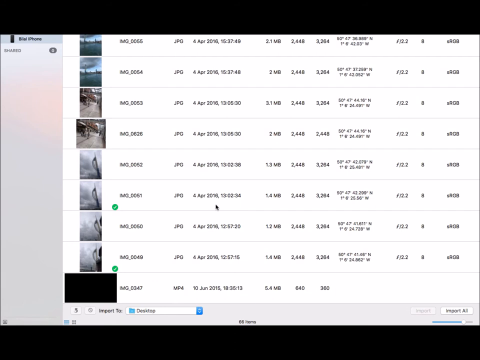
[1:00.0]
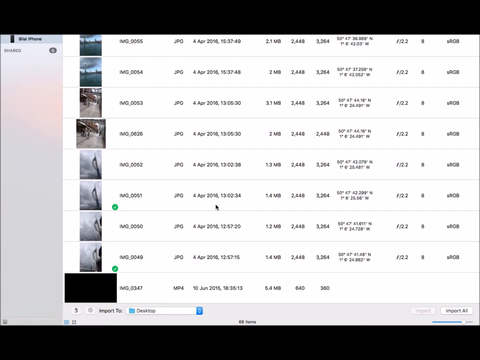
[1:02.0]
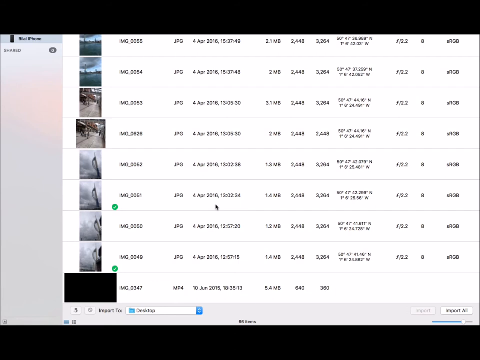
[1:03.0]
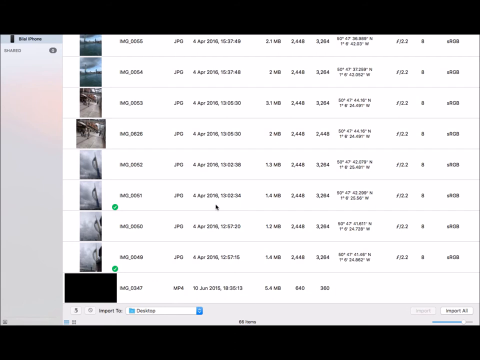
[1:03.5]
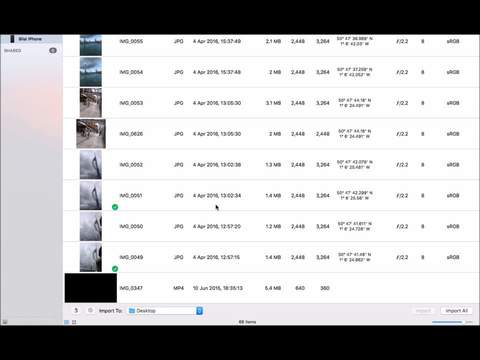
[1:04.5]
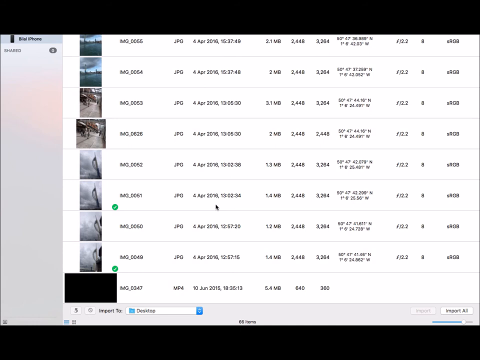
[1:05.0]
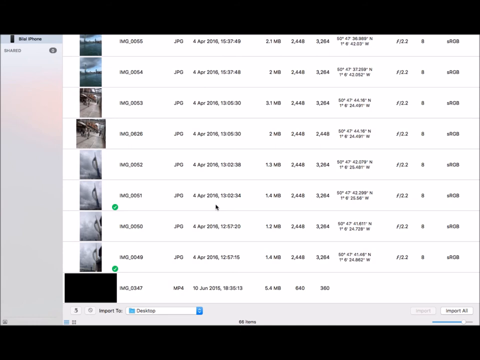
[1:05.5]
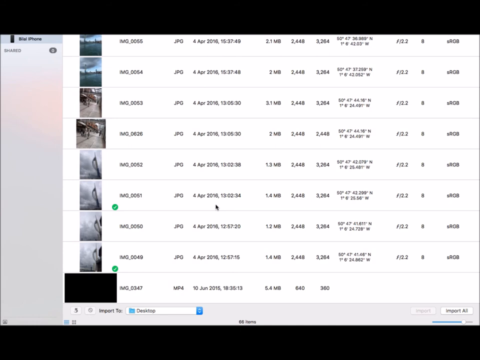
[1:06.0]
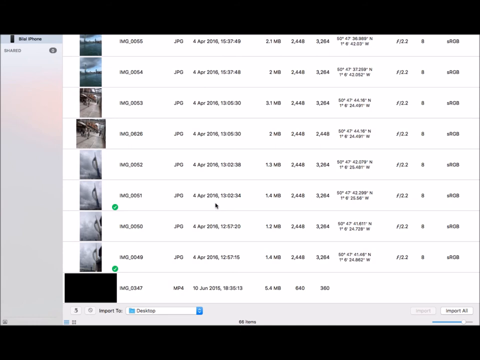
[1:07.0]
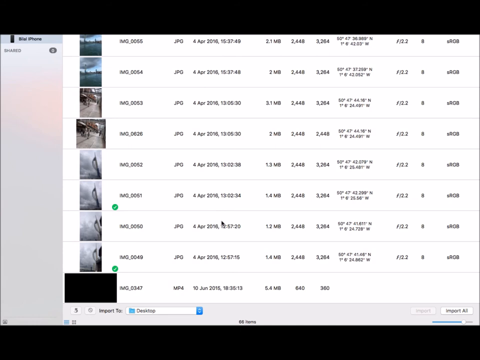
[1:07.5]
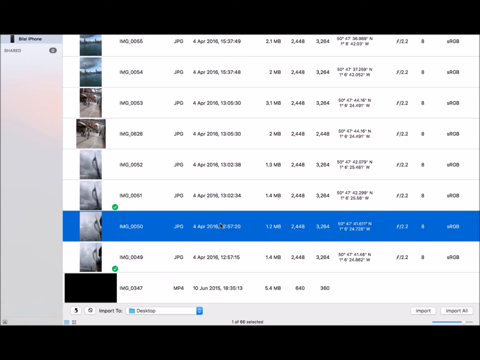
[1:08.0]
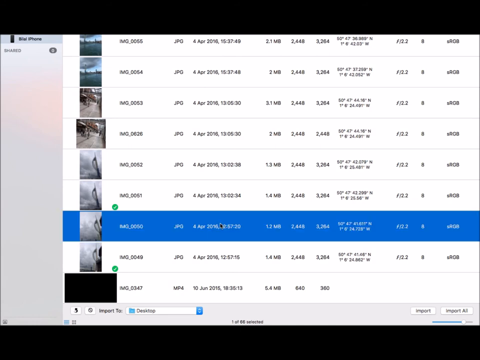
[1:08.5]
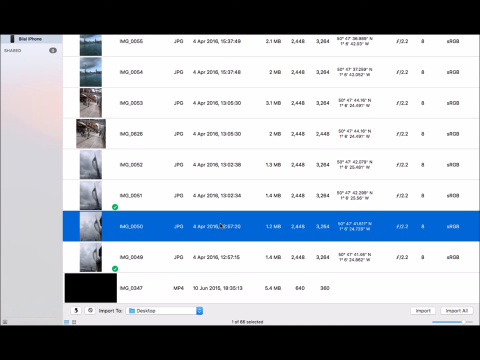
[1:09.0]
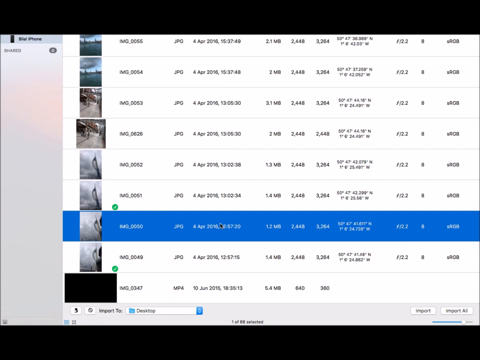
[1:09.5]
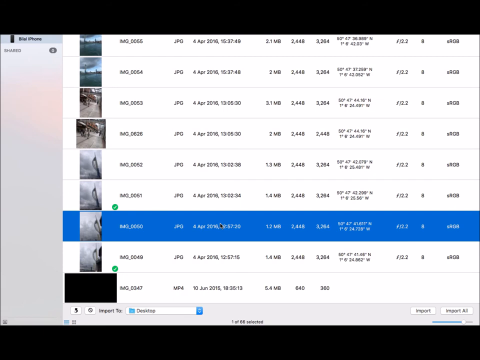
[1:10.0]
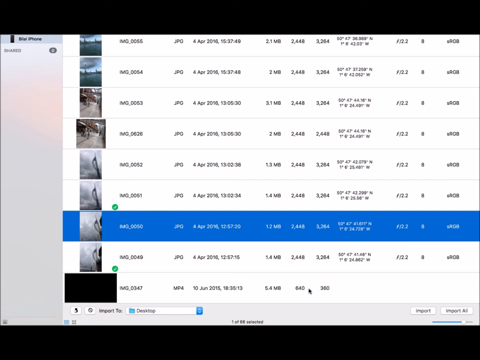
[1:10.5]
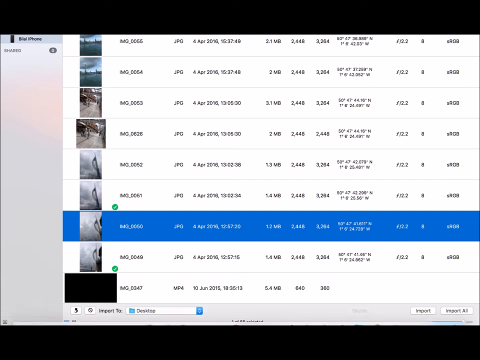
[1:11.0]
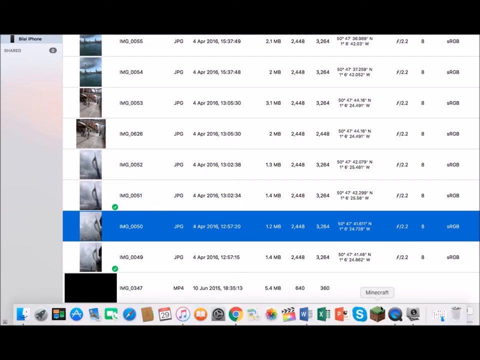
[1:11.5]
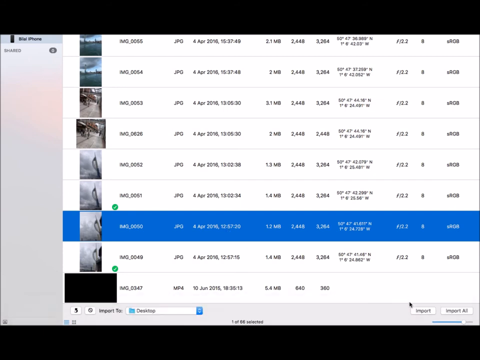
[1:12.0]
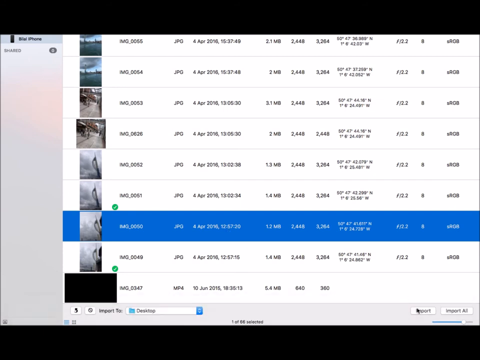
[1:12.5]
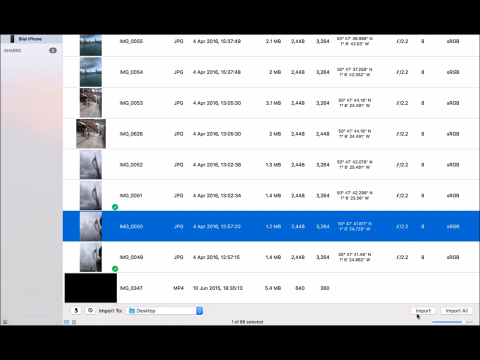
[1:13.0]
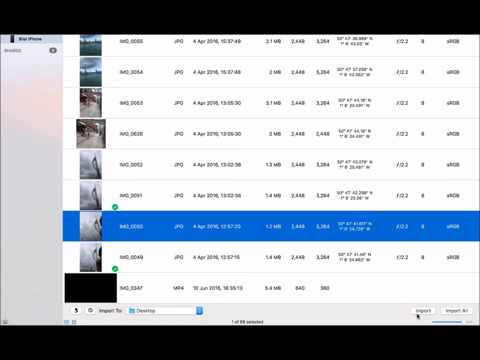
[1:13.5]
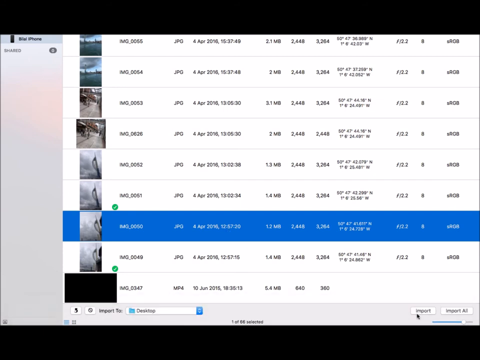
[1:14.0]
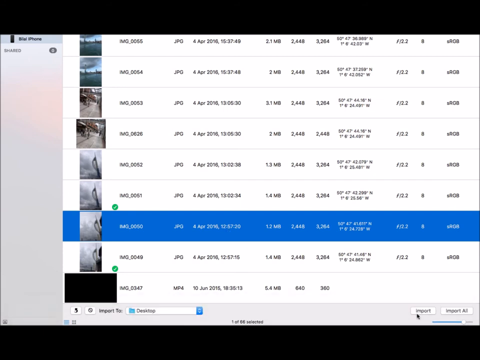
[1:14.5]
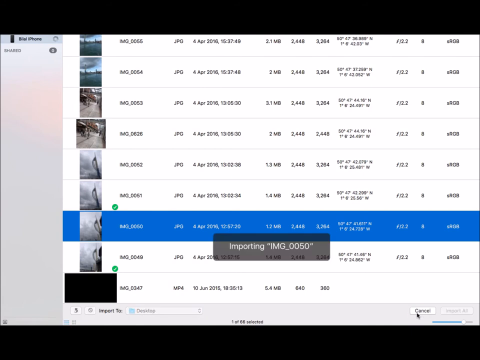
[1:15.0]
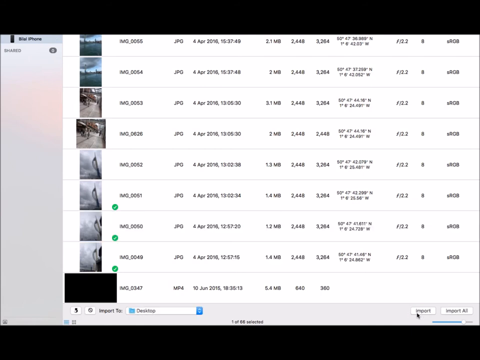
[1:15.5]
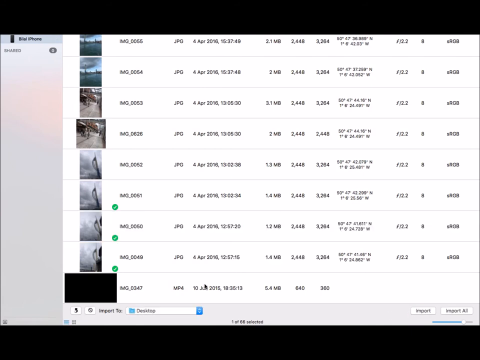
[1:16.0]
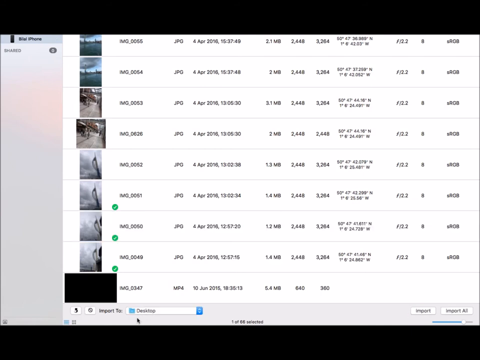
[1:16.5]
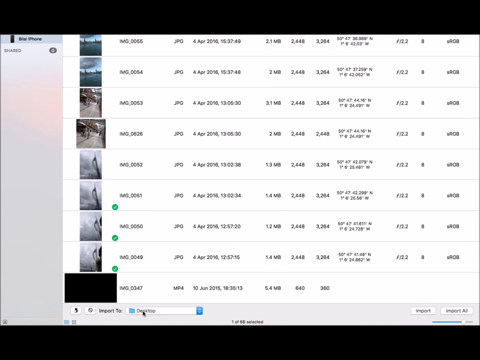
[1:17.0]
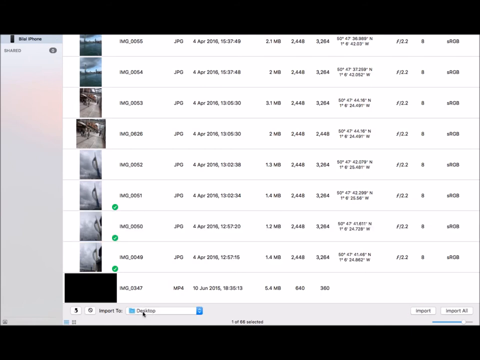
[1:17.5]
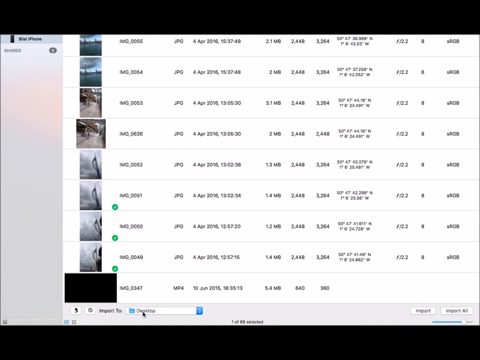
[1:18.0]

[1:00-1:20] The mouse is underneath one of the image dates in the middle of the screen. Two of the images are selected, shown by small green check marks to the right of the photos. The photos seem to be repeated or very similar. The person clicks the image third up from the bottom, and the image and its information are highlighted in blue. The black mouse rolls over and clicks an import button at the bottom of the screen, and the blue highlight disappears. Next to the import button is a button that says "import all," and there is also a drop-down button for choosing where to import the images, currently set to desktop.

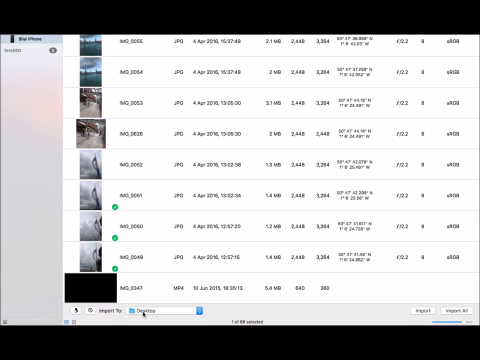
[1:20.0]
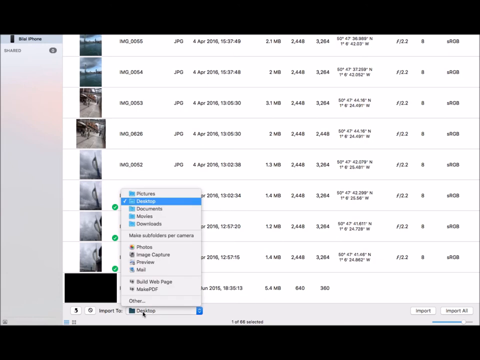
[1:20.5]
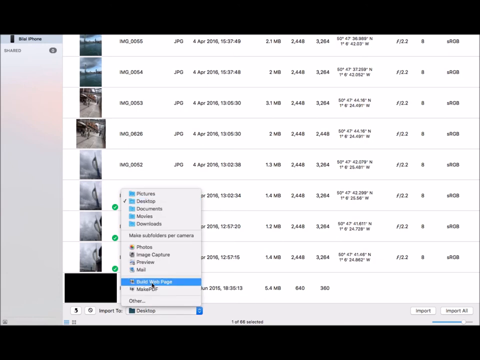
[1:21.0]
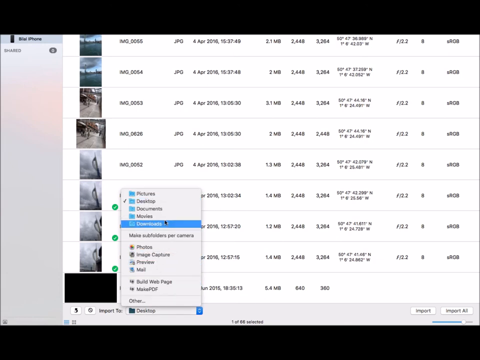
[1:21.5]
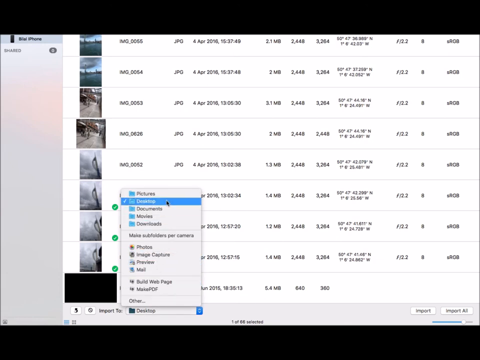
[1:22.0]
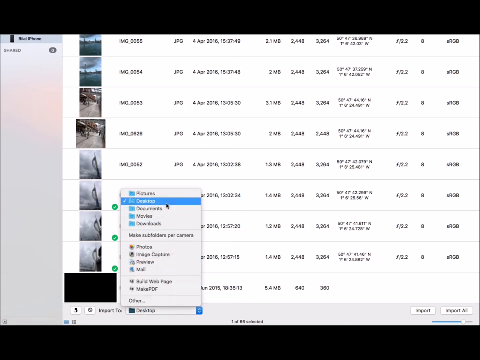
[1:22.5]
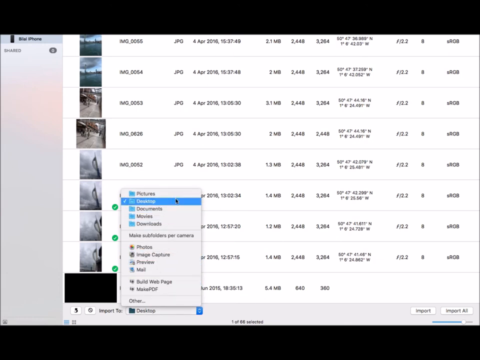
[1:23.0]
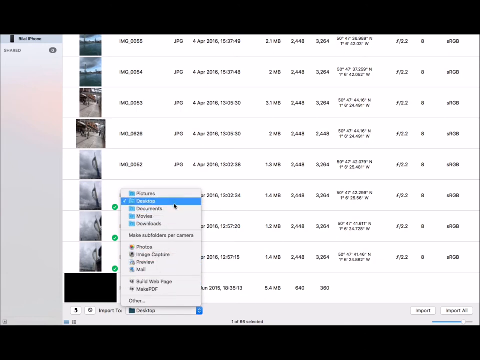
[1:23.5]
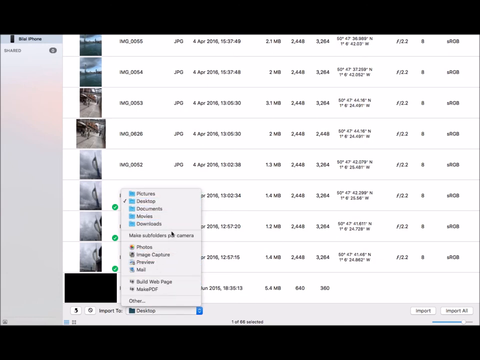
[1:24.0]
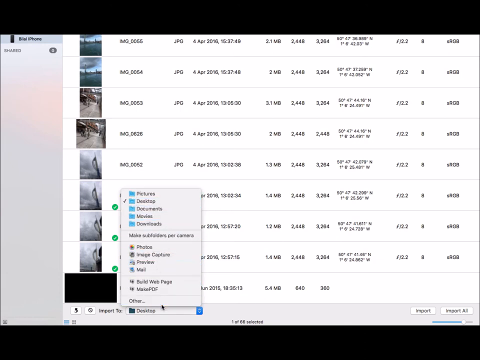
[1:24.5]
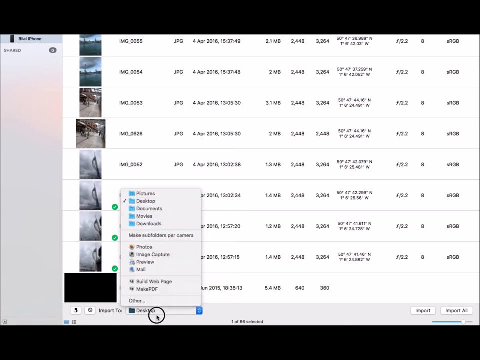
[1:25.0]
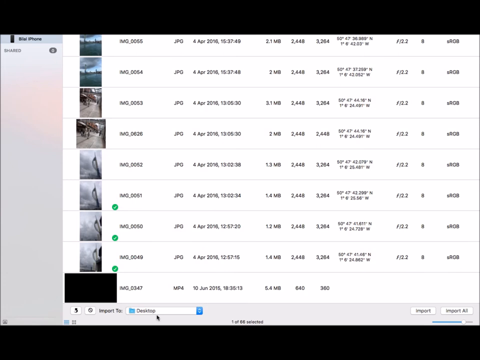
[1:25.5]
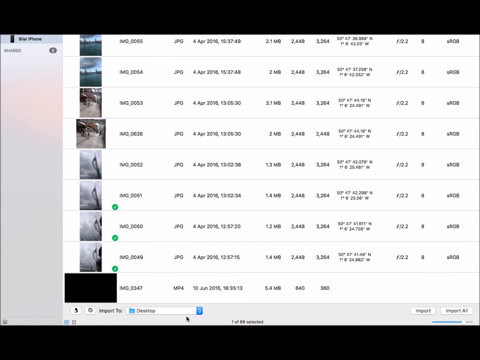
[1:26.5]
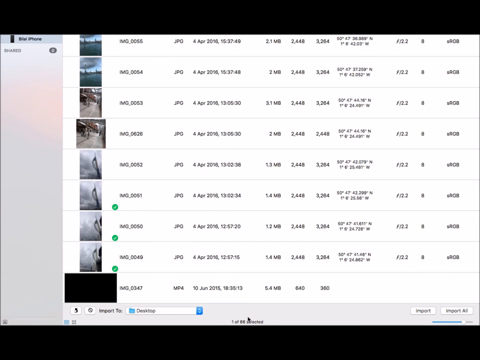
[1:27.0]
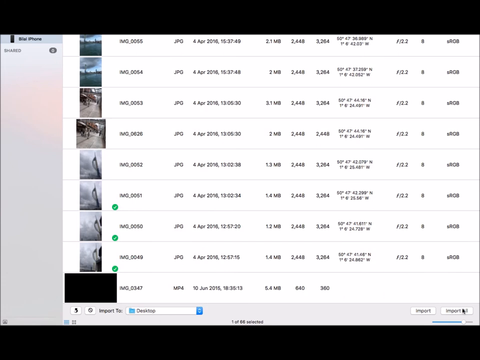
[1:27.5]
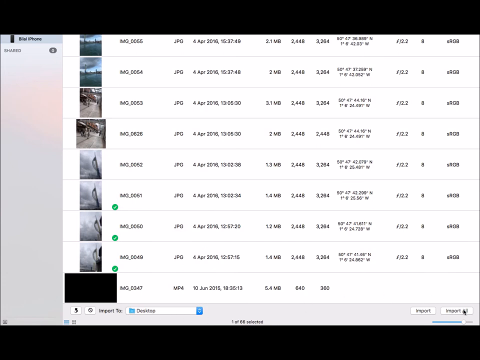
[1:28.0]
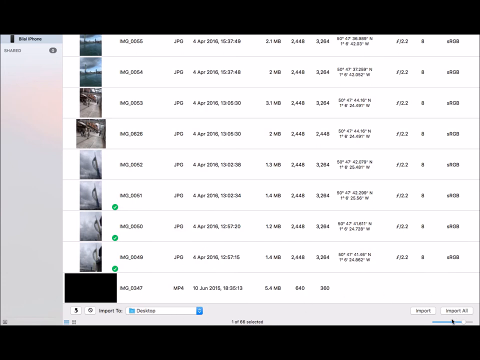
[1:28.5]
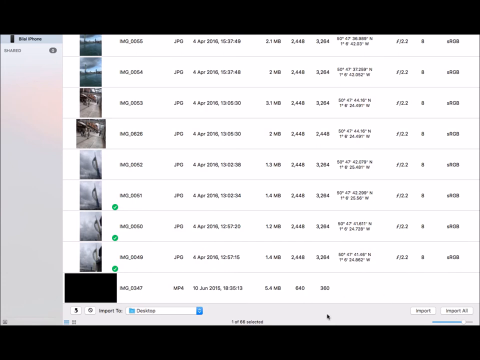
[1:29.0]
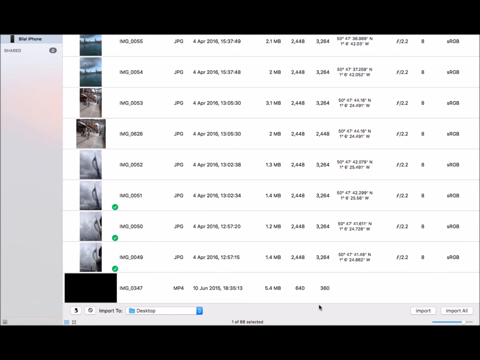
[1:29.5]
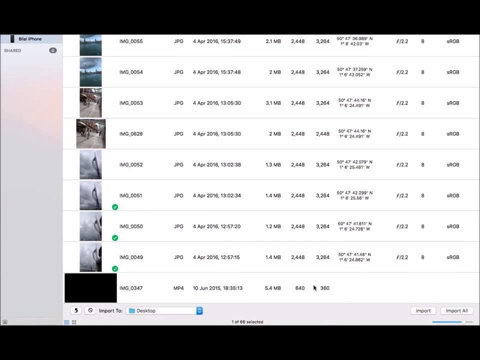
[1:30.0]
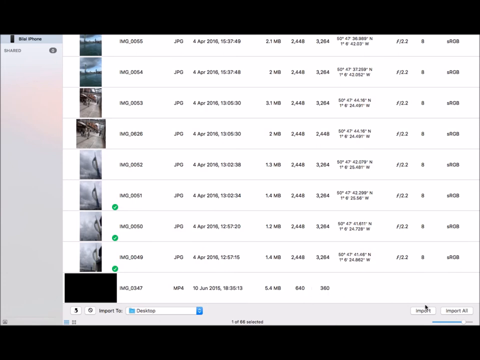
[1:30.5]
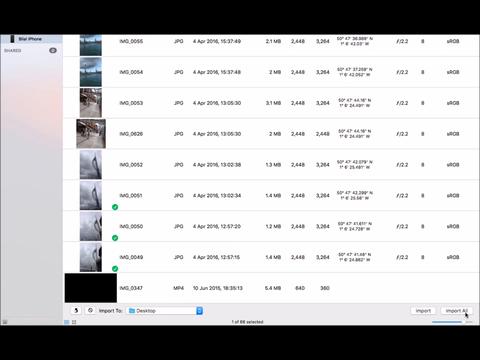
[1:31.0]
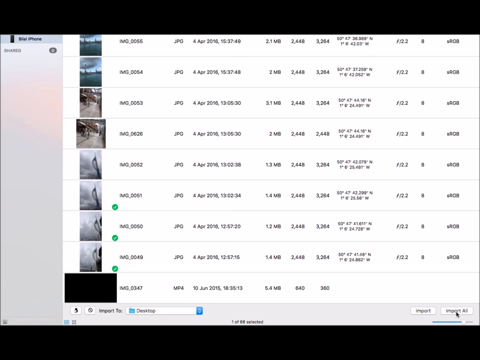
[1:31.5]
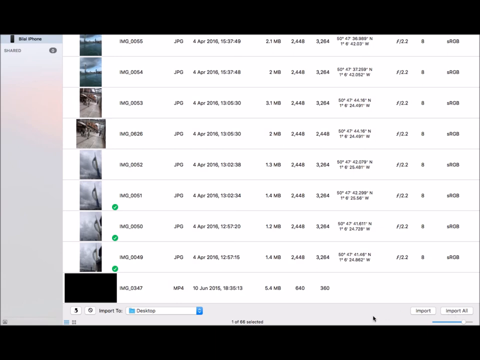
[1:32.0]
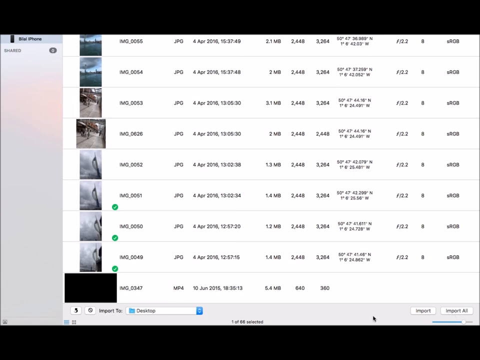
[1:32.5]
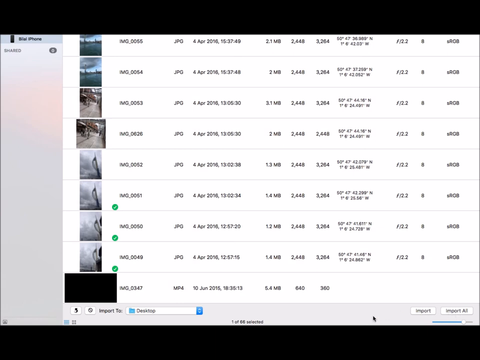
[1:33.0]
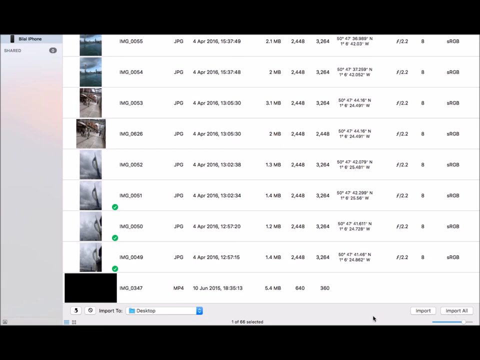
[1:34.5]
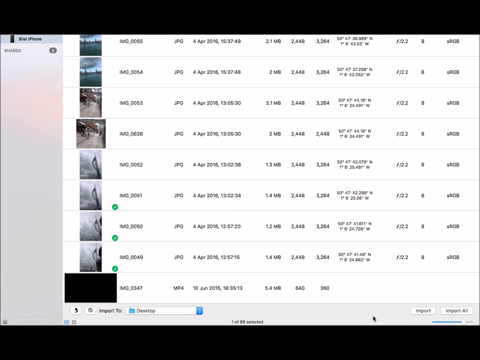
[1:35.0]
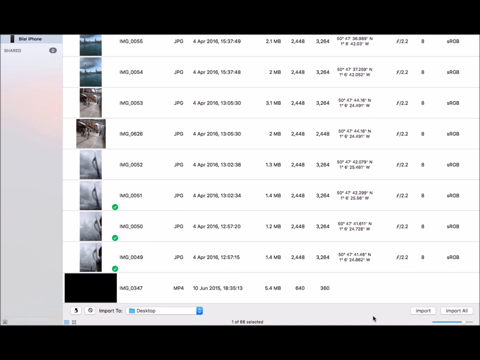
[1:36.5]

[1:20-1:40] A menu pops up when the person clicks the drop-down button to change where the files are imported, with a black check mark next to the desktop option. They scroll through the options, then collapse the menu, leaving it on desktop. They move over the import all button but do not press it. Beneath the import and import all buttons is a slider bar set to the right side. Other save options include pictures and downloads, and there are options to send the images through mail or turn them into a PDF document. The bottom image is just black, larger than the photos above it, and has less information than they do.